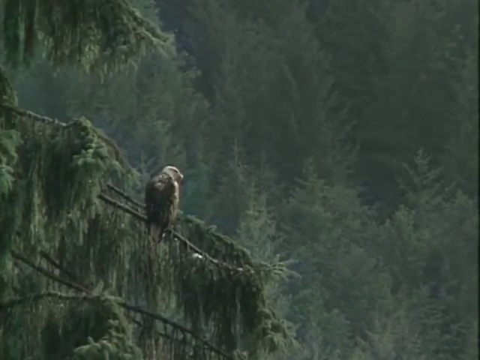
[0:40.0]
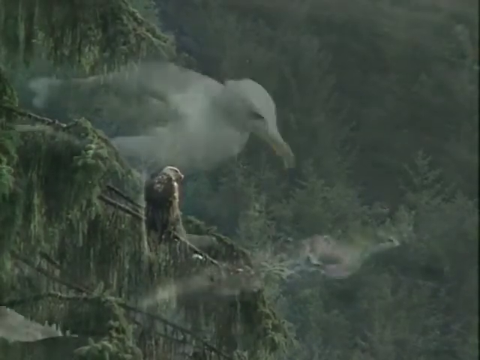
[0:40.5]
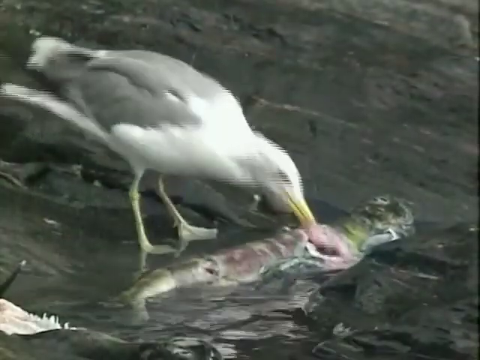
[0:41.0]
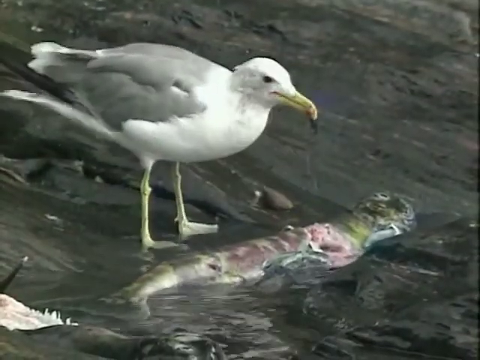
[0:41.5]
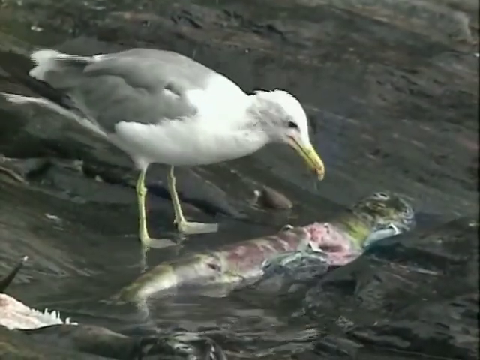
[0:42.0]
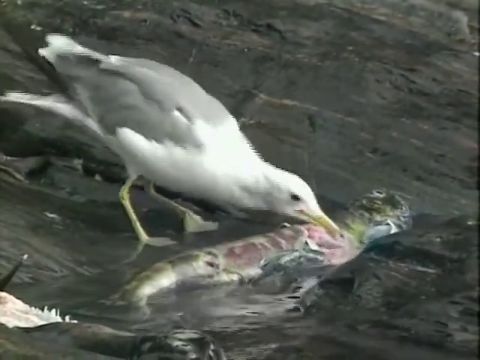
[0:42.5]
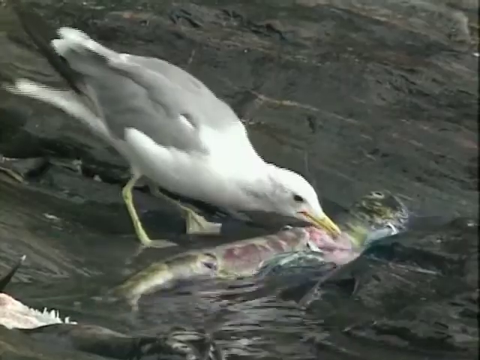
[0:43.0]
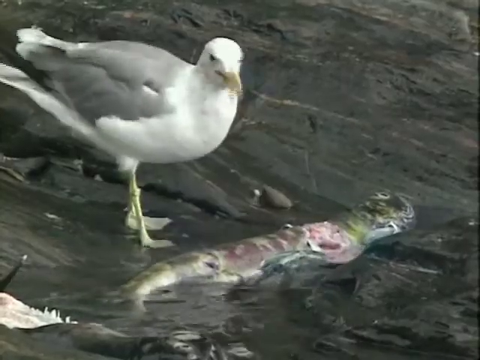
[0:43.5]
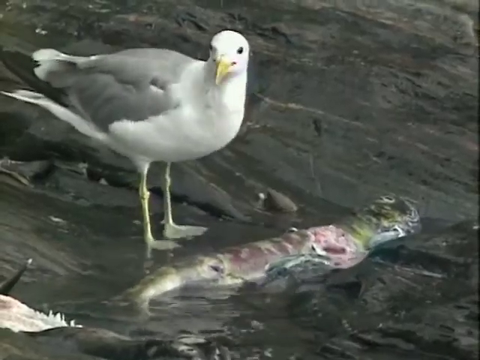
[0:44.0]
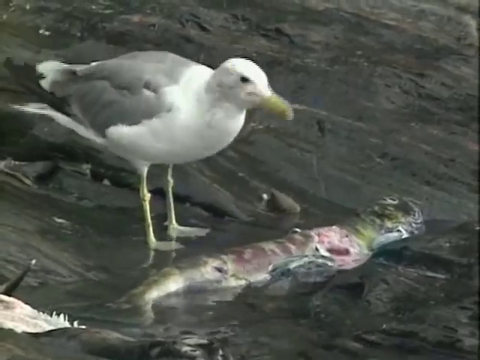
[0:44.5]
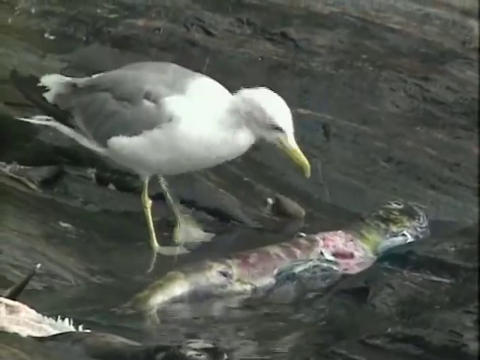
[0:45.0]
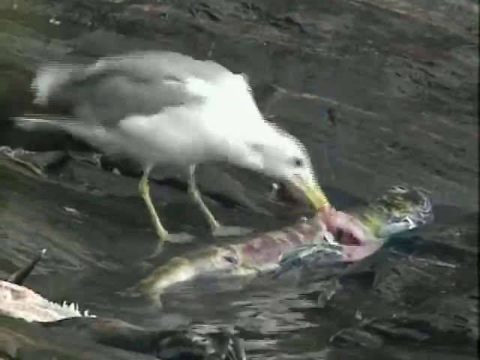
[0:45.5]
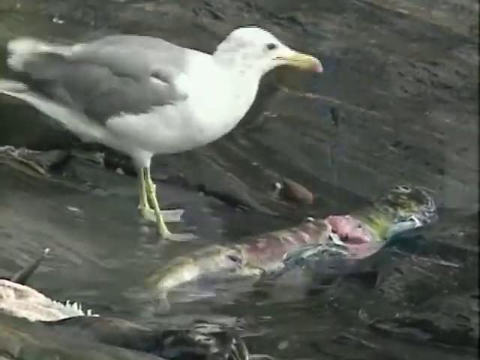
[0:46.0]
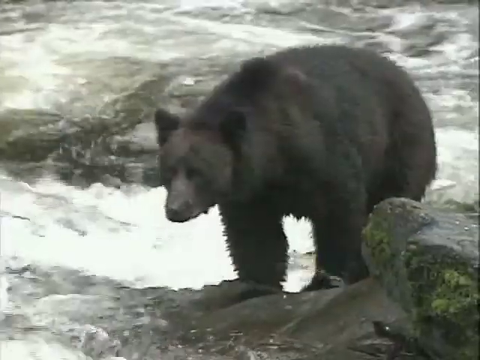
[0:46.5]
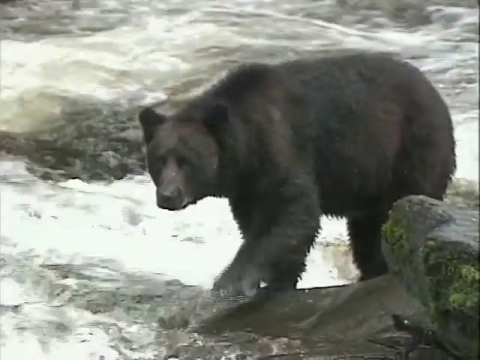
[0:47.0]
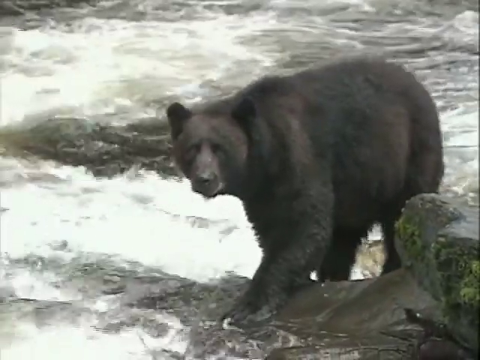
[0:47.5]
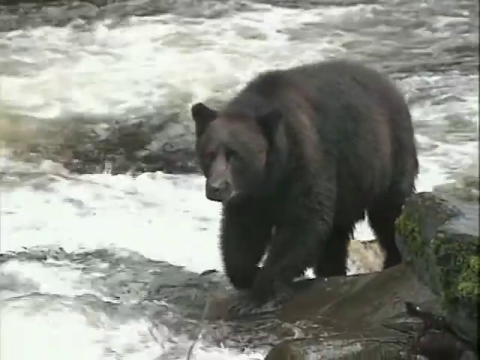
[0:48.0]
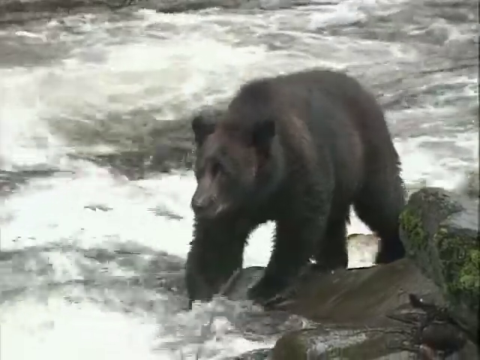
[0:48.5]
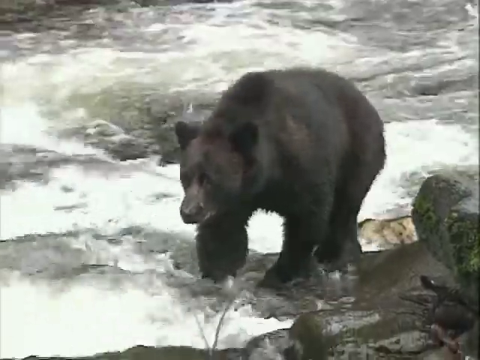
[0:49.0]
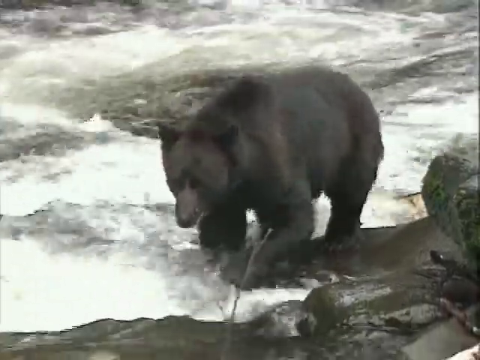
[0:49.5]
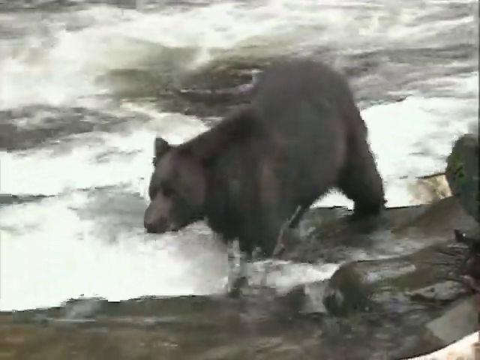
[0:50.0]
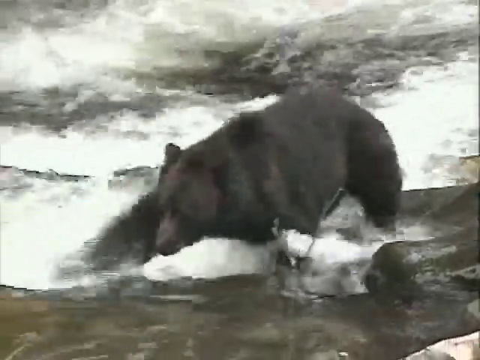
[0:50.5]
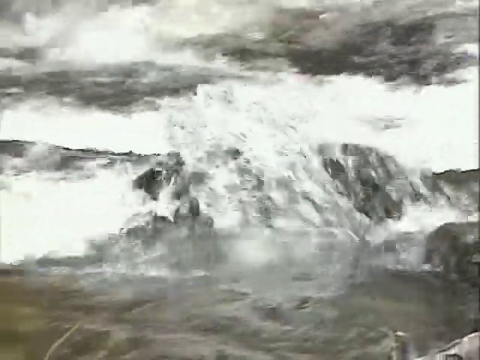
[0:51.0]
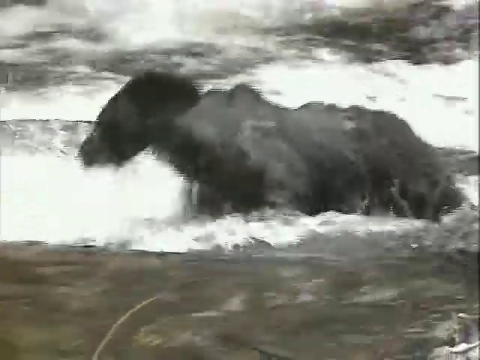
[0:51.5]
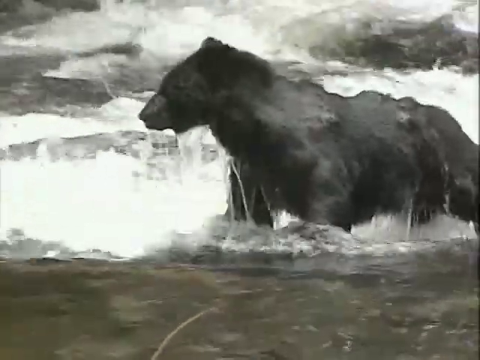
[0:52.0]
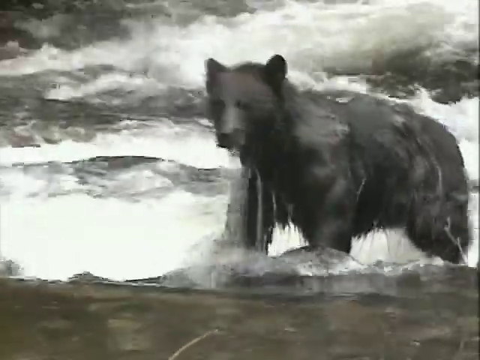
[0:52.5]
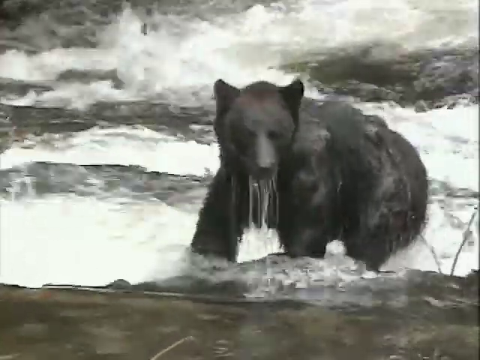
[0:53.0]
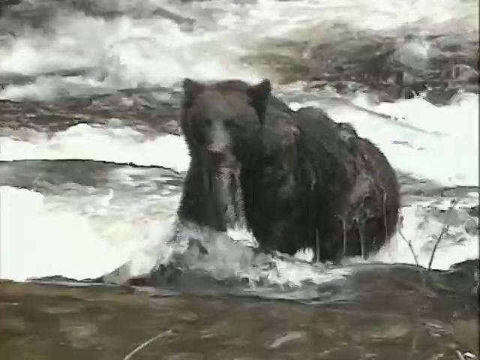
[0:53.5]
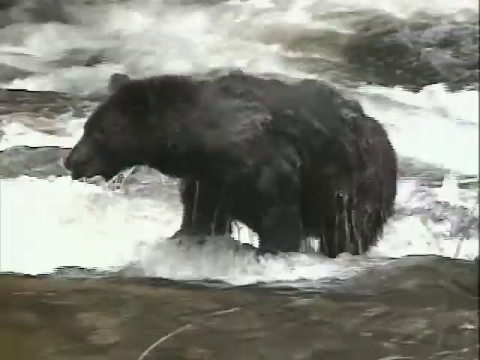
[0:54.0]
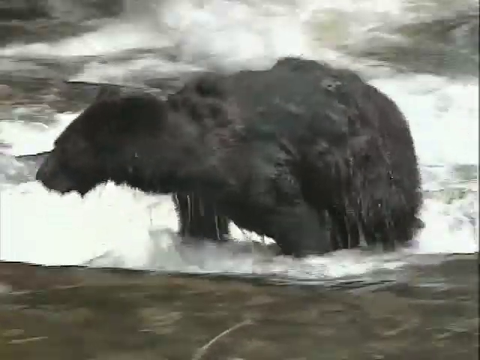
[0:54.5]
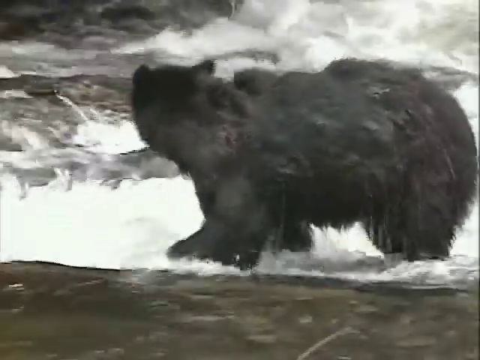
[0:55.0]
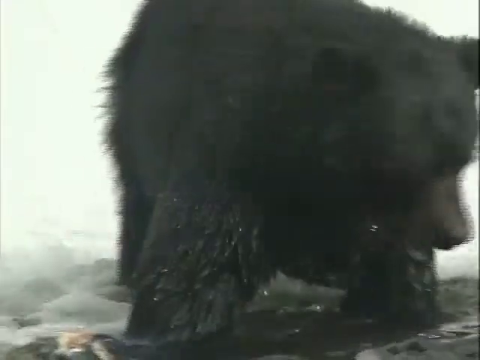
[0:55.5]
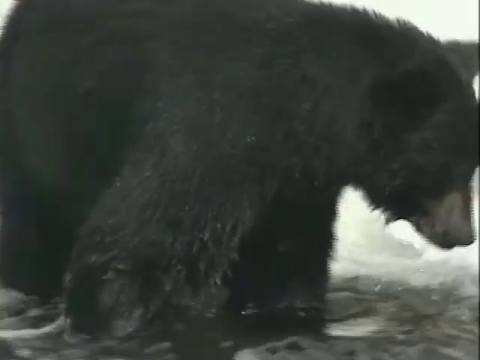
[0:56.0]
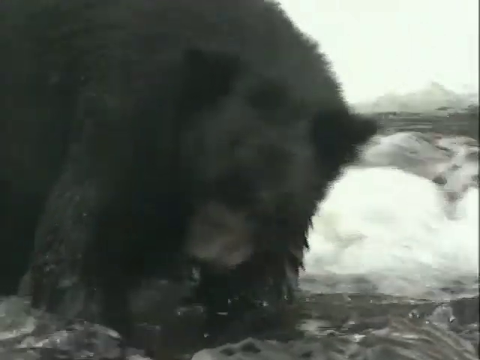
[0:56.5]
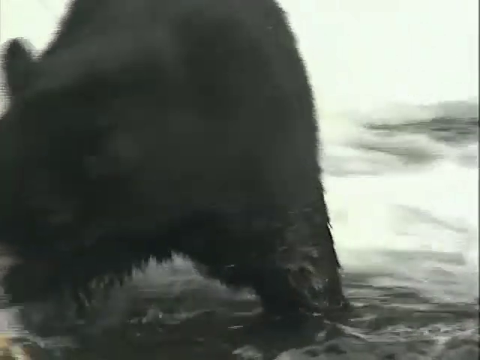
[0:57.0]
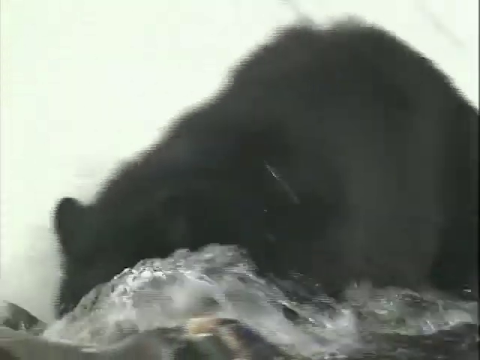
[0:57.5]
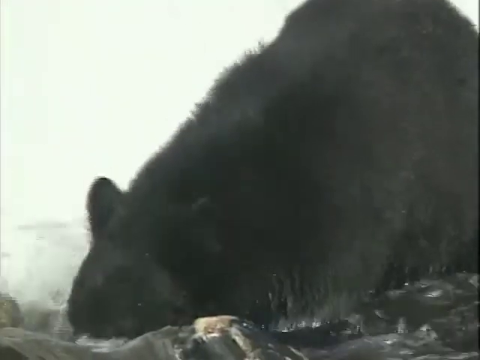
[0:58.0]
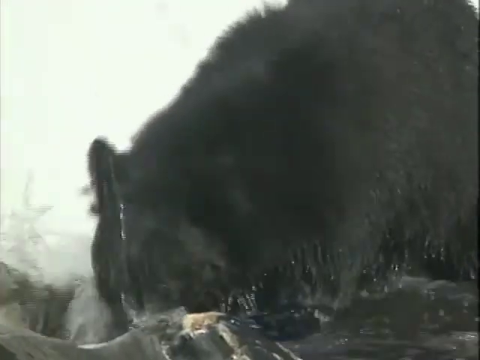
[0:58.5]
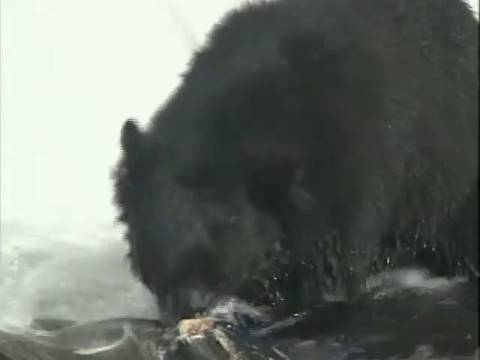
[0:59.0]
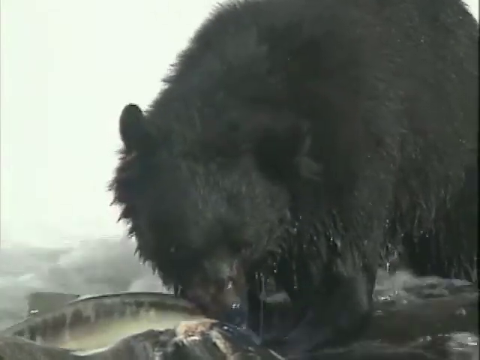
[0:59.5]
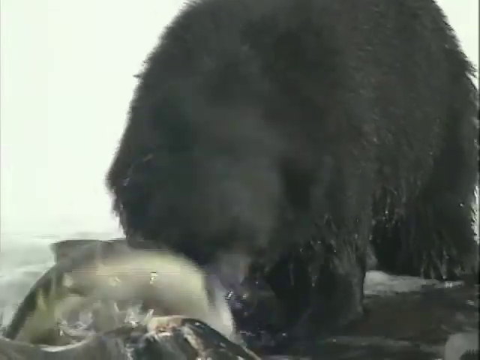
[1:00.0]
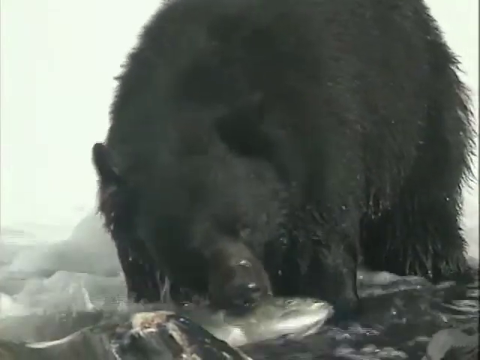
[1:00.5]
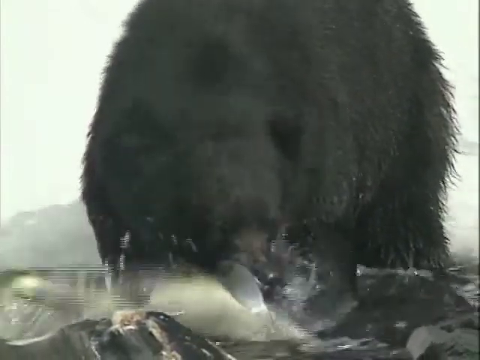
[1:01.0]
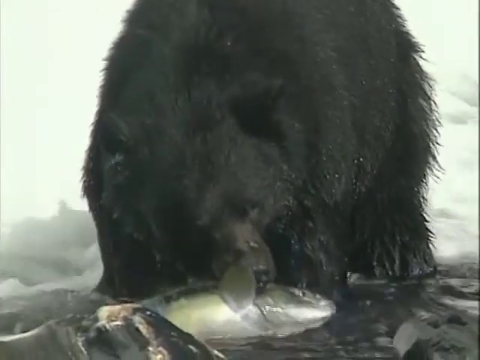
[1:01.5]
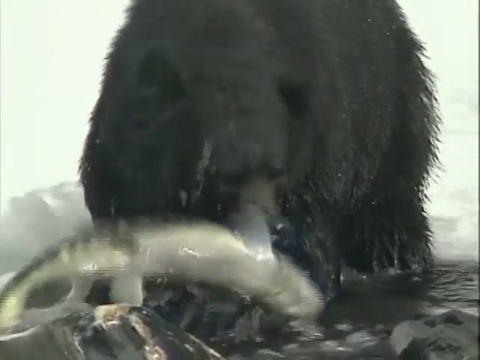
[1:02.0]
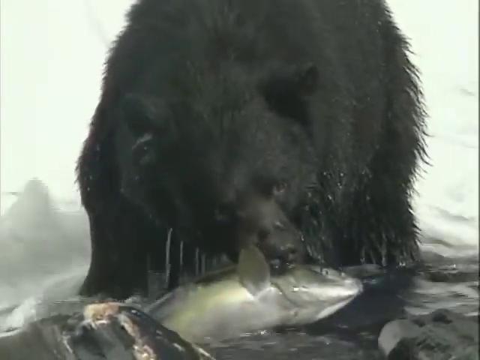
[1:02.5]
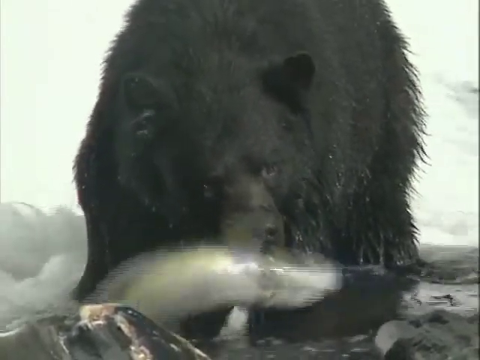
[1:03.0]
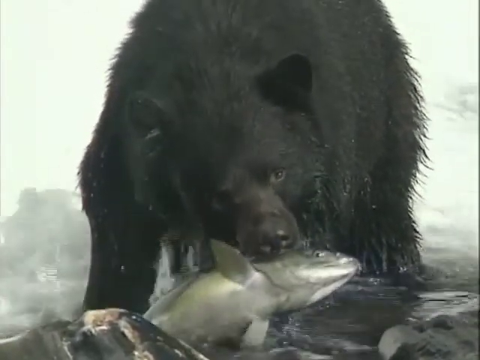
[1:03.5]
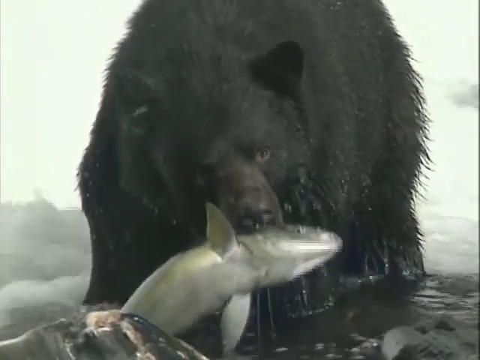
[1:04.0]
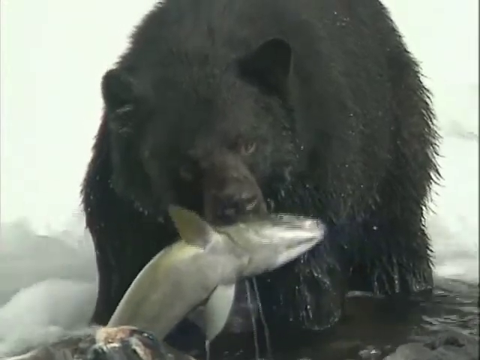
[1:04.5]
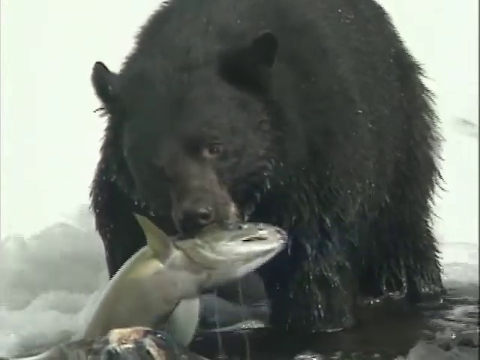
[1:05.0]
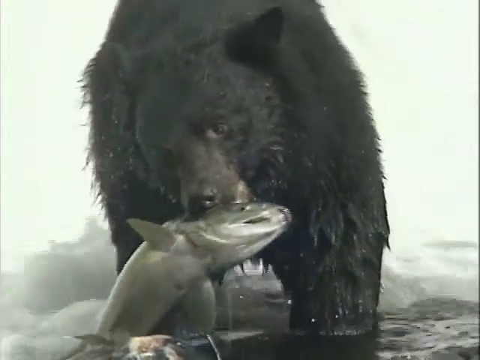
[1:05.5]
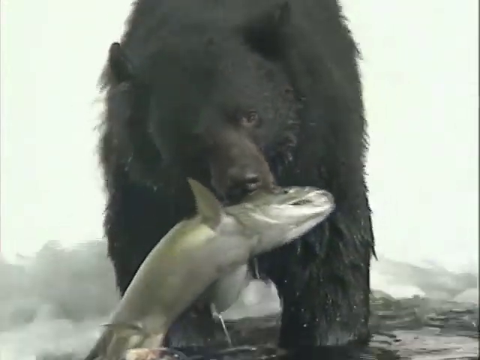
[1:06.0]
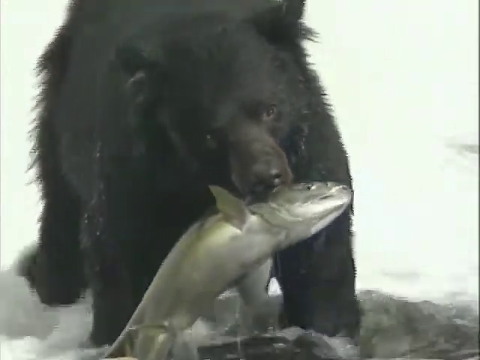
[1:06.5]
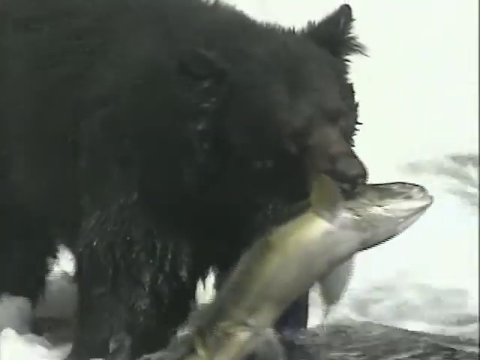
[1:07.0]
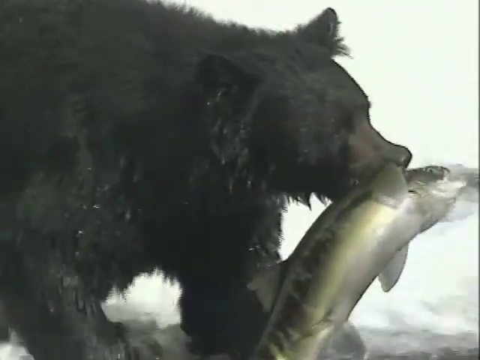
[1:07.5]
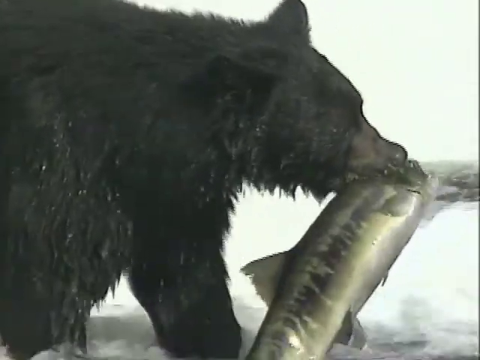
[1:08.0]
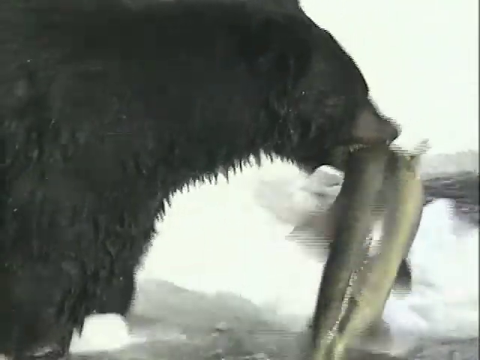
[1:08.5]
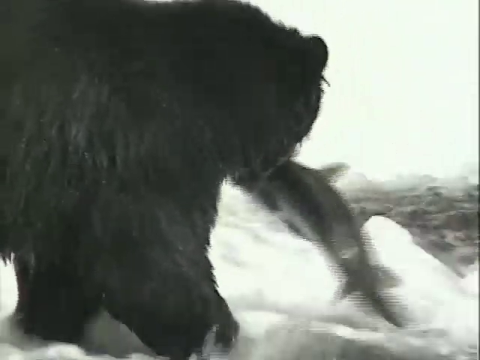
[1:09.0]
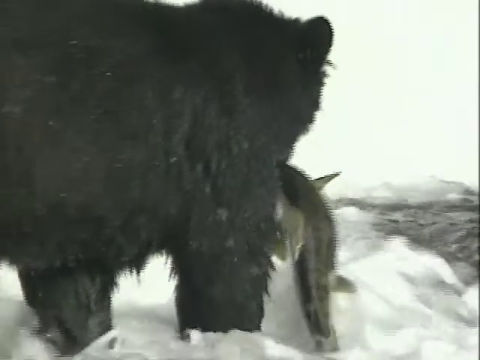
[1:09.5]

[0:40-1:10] A bald eagle sits on a tree branch that leans downward and to the right, its wings folded, looking toward the right side of the screen. A close-up follows of a seagull that appears to be eating a dead salmon: the seagull picks apart the middle of the salmon, which is pink, while the scales on the other side are a greenish color. The seagull bends down, picks at the middle, tears away some salmon and eats it, about three times. Then a brown bear walks on the right side of a river, surrounded by white suds of water, moving slowly toward the lower left of the screen. It sees a fish in the water in the lower left corner and grasps for it, but the fish jumps away; the bear lifts its head and looks to the left without any fish, then turns back and looks at the camera. Another shot shows a brown bear in close-up, with the river bubbling behind him and making white suds. The bear looks to the right side of the screen, then to the left, then jumps down on a fish in the water and catches it with its mouth. It looks like a large salmon; the bear lifts it slightly from the water as the fish flaps around and still moves its mouth. The bear turns to its left and starts to walk away toward the upper right side of the screen.